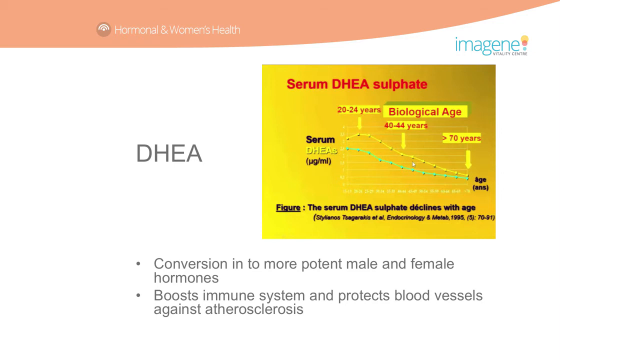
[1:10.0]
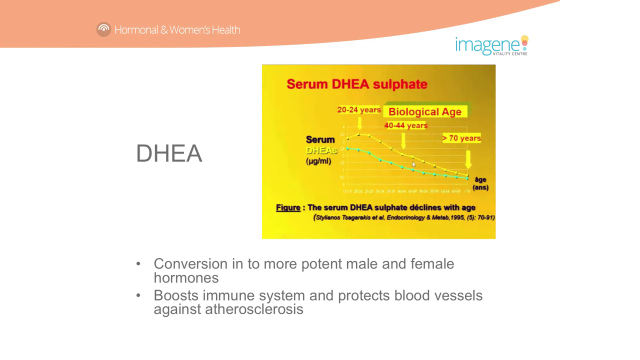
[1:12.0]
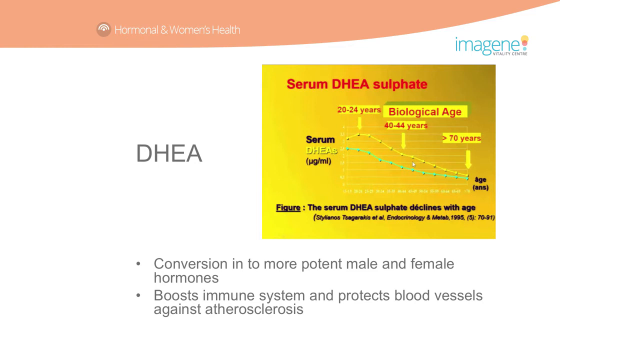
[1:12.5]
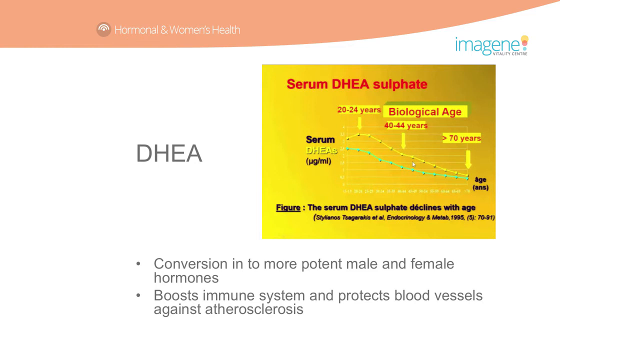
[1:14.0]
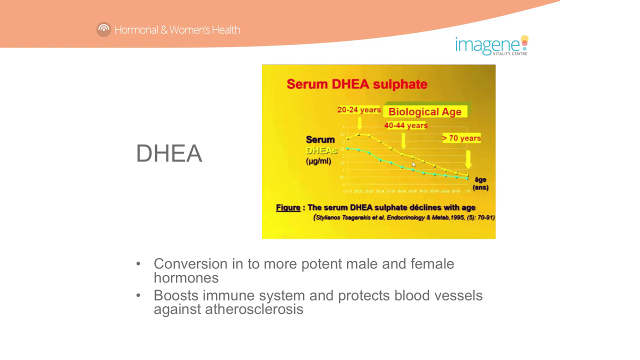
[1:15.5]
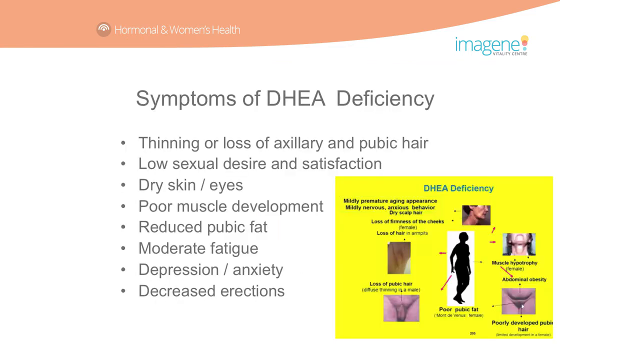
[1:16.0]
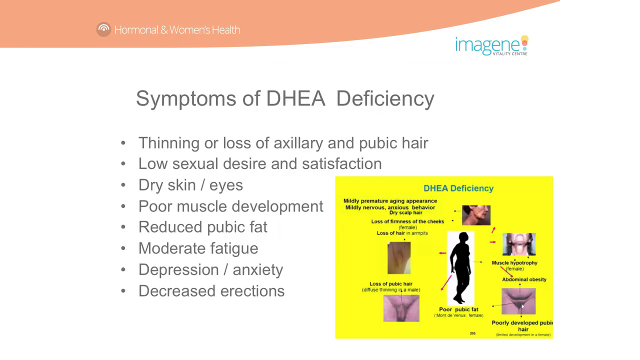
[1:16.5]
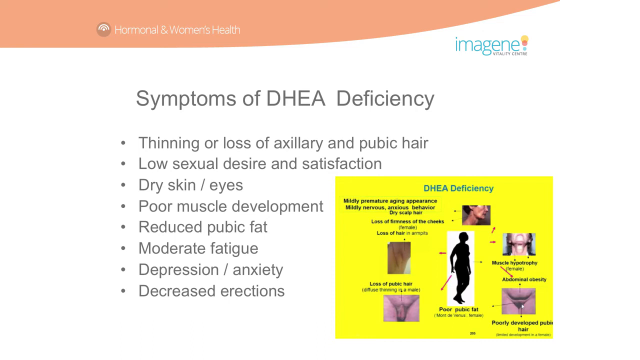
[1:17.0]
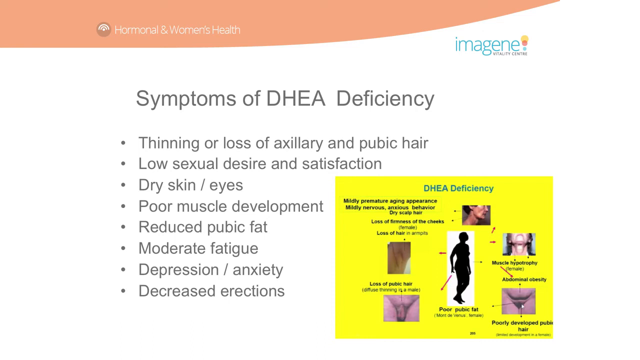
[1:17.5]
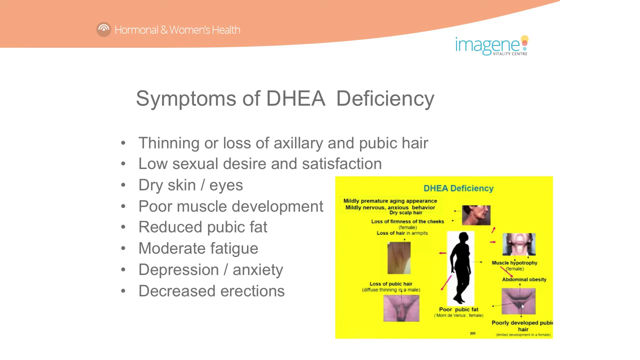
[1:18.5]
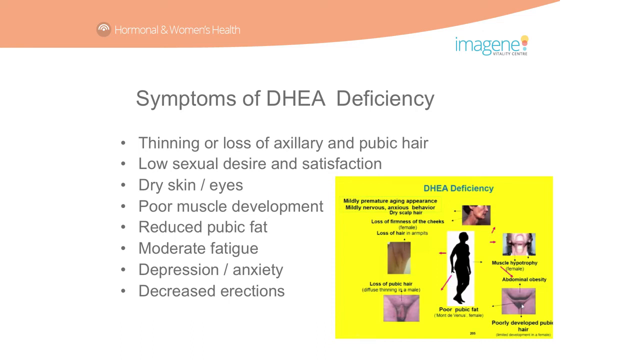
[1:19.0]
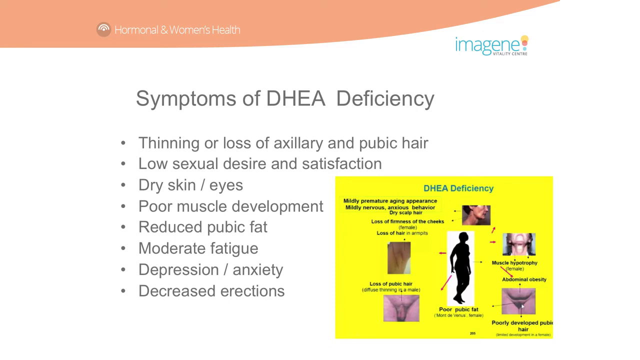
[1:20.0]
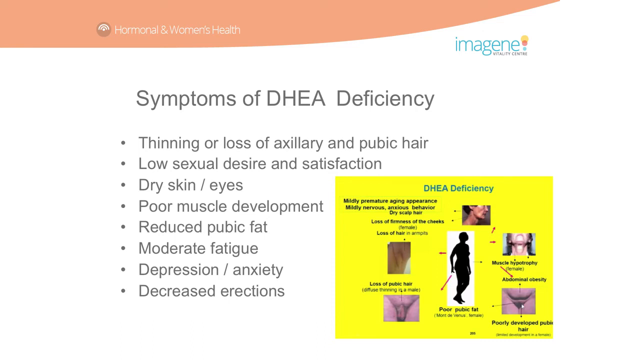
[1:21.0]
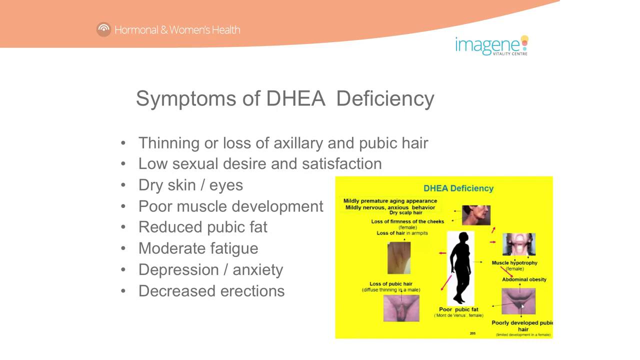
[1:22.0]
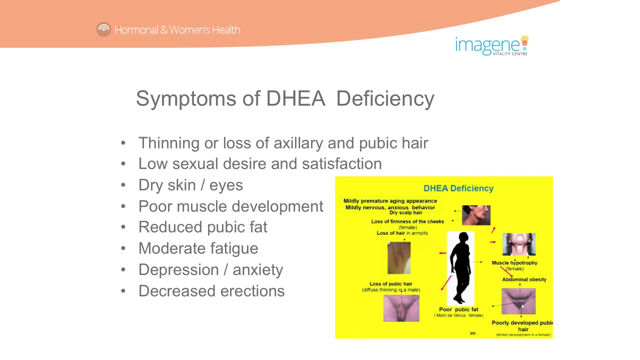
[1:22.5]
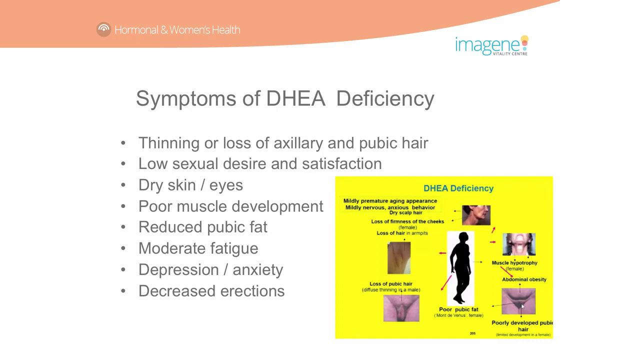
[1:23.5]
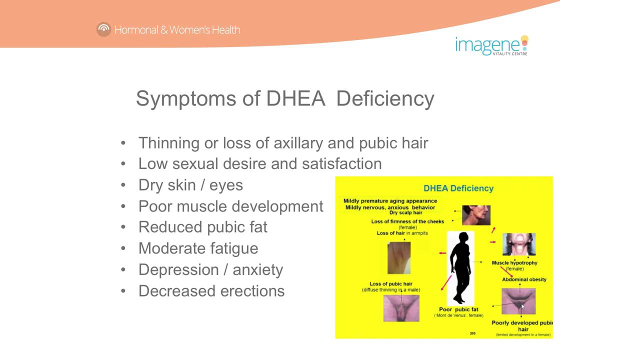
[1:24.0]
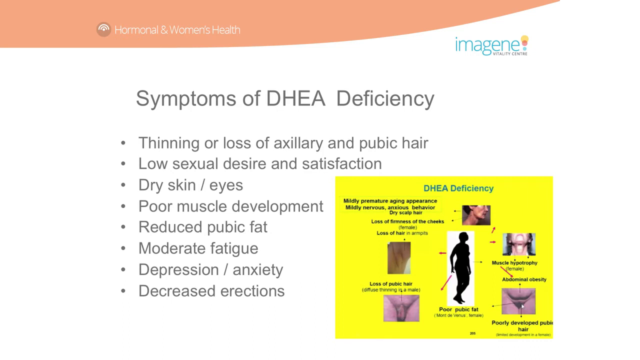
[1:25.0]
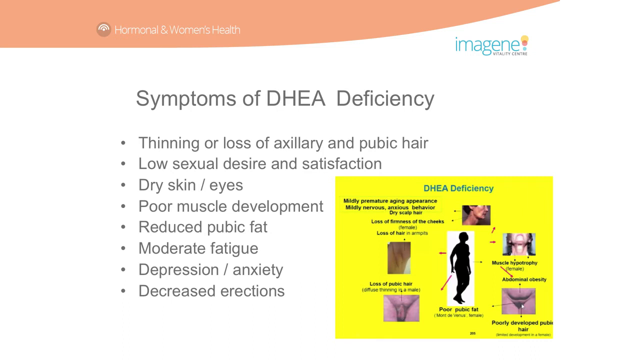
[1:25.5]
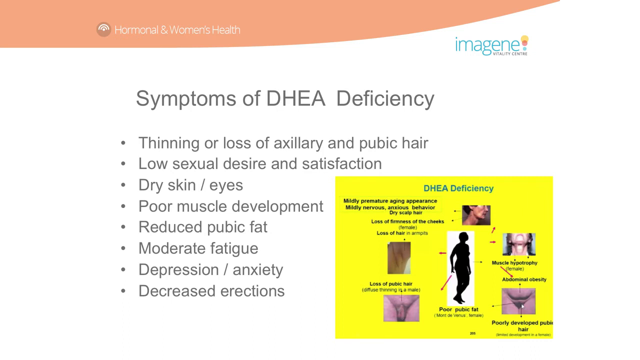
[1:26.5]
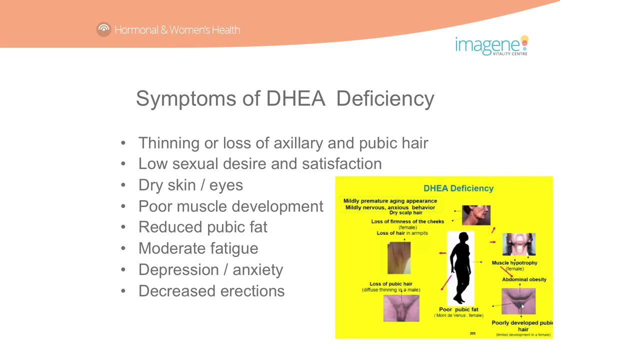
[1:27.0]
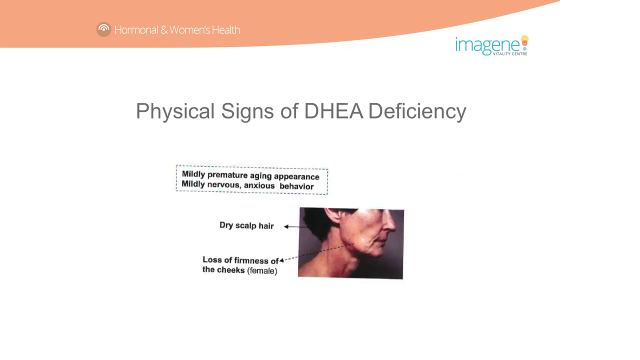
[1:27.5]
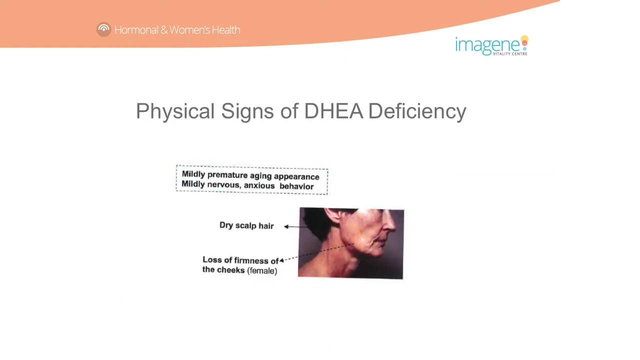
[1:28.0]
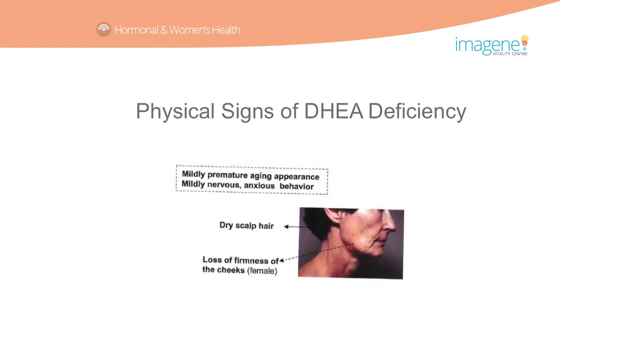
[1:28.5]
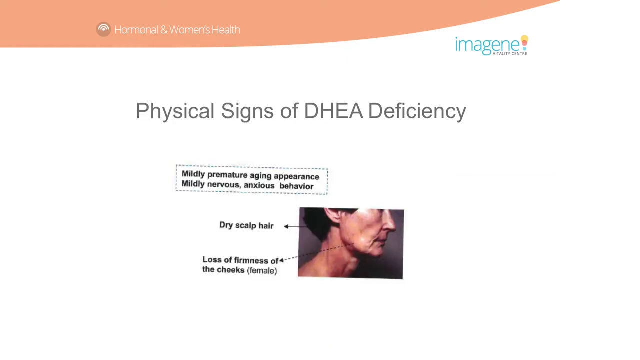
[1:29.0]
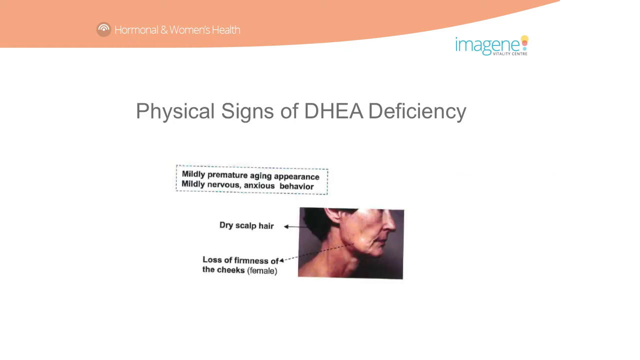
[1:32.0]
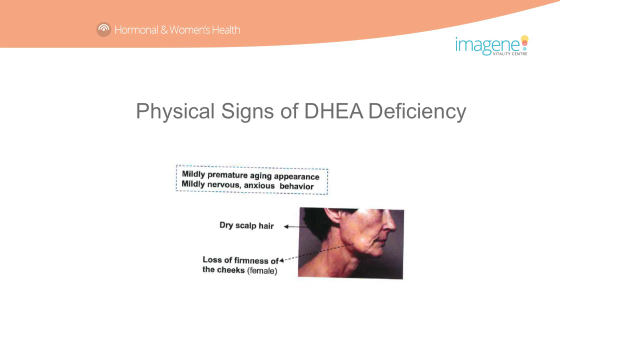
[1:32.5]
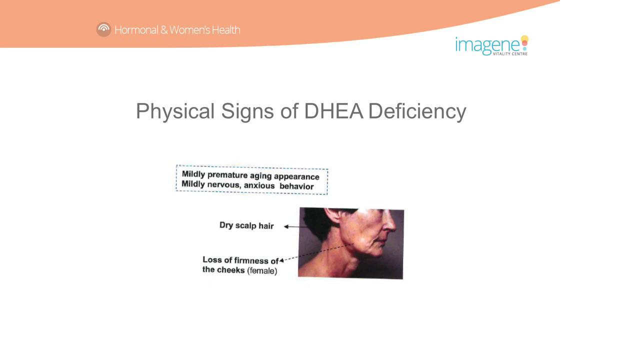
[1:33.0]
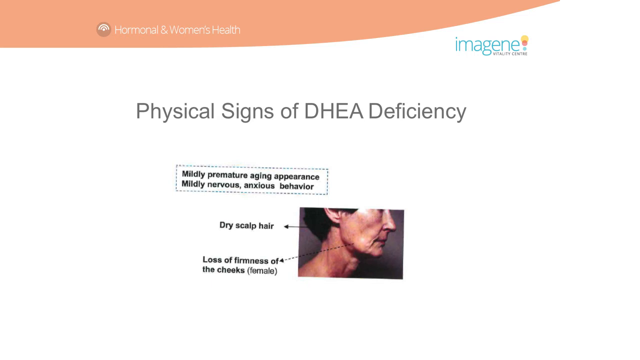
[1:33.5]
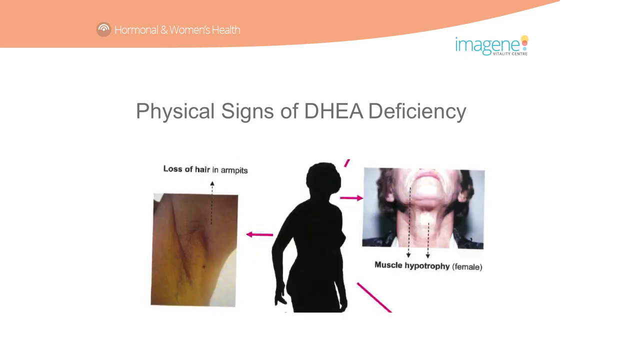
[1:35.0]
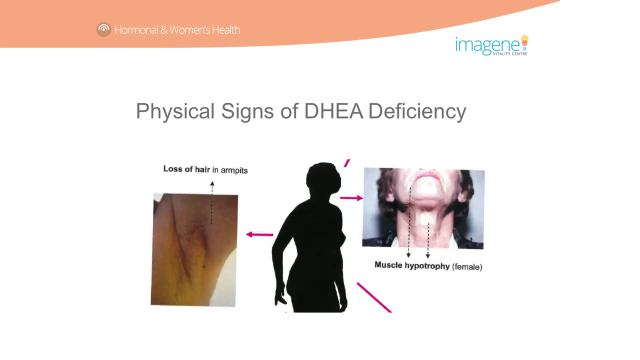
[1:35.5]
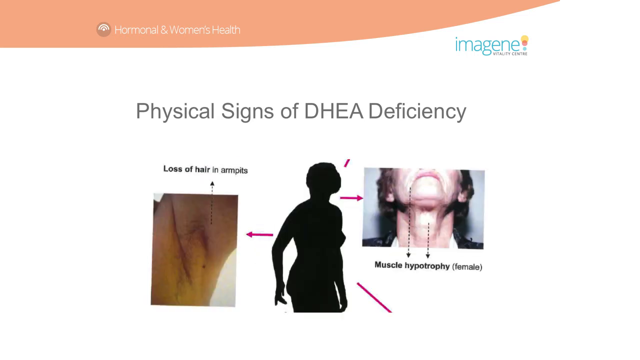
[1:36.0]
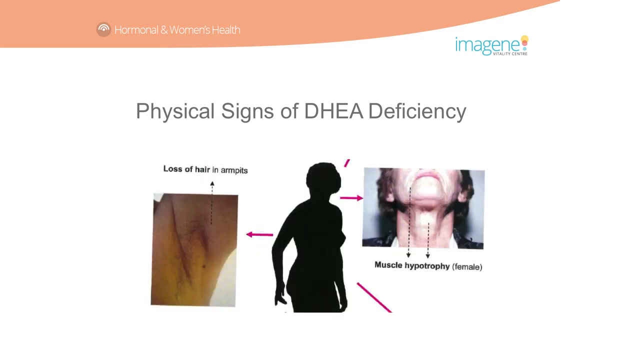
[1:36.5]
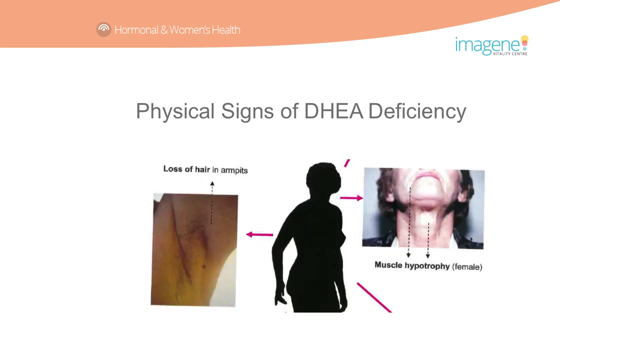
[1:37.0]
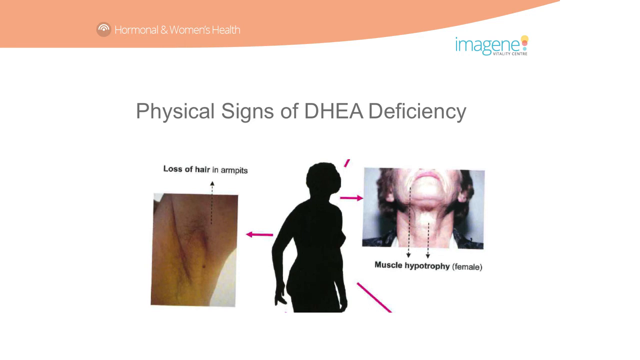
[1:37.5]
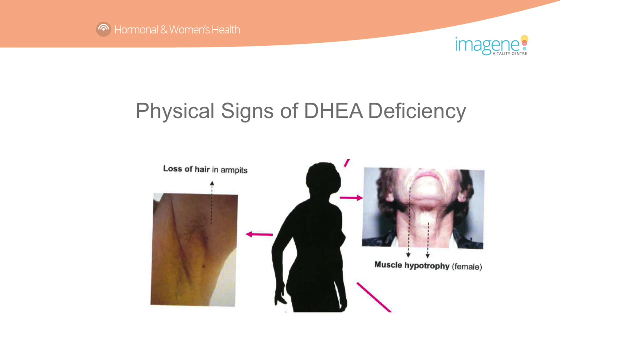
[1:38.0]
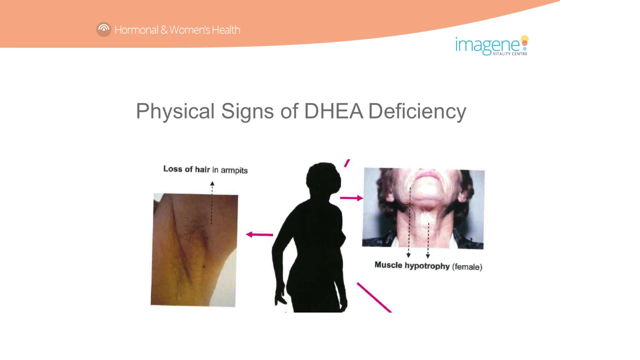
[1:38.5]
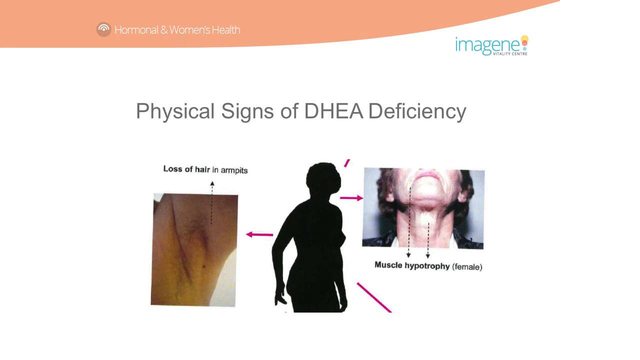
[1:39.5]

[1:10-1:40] The two bullet points remain at the bottom: "conversion into more potent male and female hormones" and "boosts the immune system and protects blood vessels against atherosclerosis". Then a slide reads "symptoms of DHEA deficiency" with bullet points: "thinner or loss of axillary and pubic hair", "low sexual desire and satisfaction", "dry skin", "poor muscle development", "reduced pubic fat", "moderate fatigue", "depression/anxiety", and "decreased erections". An image on the right side of the bullet points points to some of these issues. Then a slide reads "physical signs of DHEA deficiency", listing a mildly premature appearance, "mildly nervous, anxious behavior", "dry scalp hair", and "loss of firmness around cheeks".